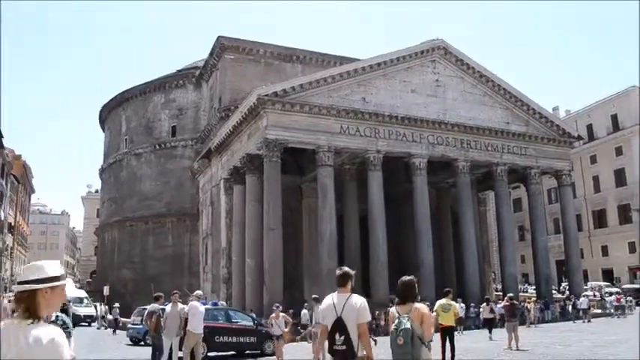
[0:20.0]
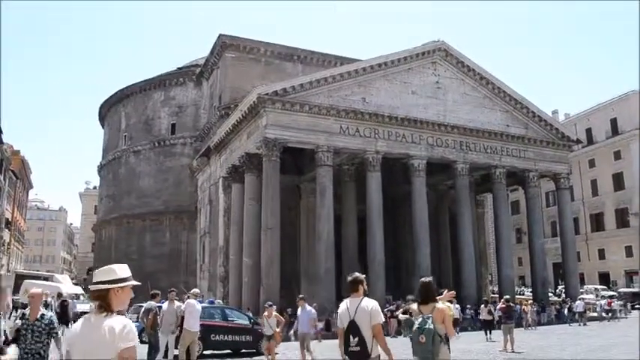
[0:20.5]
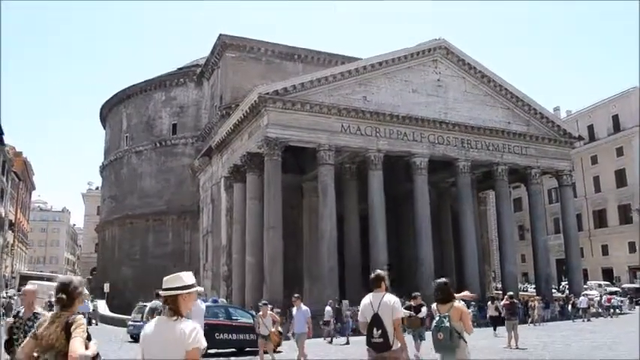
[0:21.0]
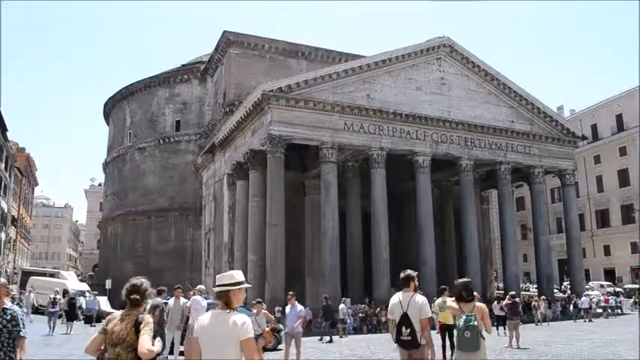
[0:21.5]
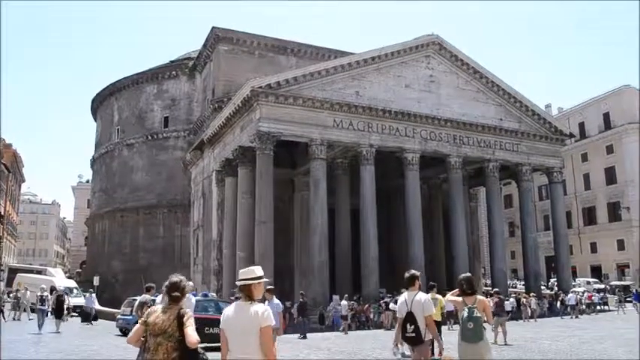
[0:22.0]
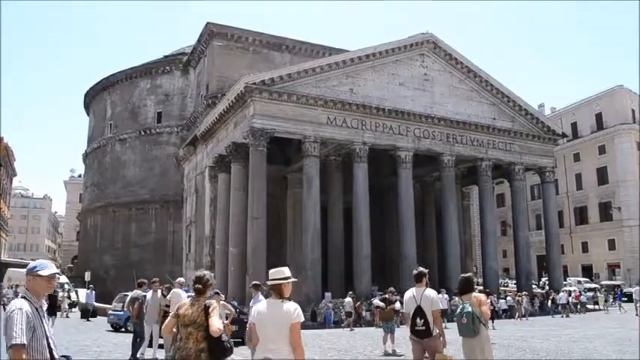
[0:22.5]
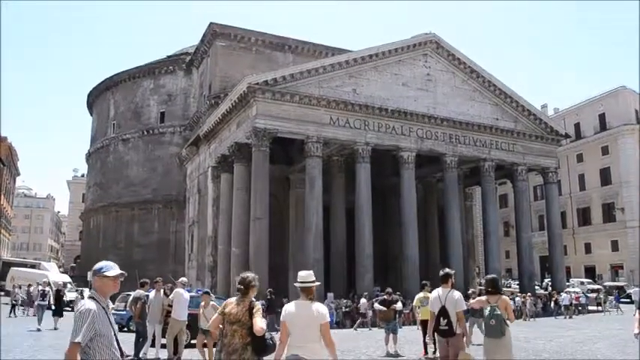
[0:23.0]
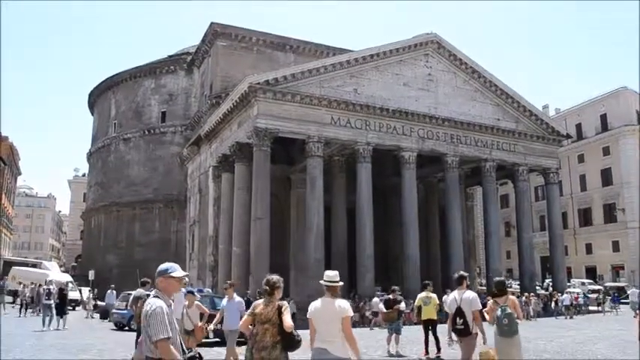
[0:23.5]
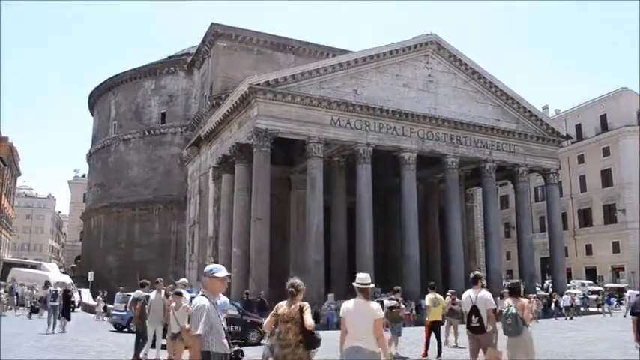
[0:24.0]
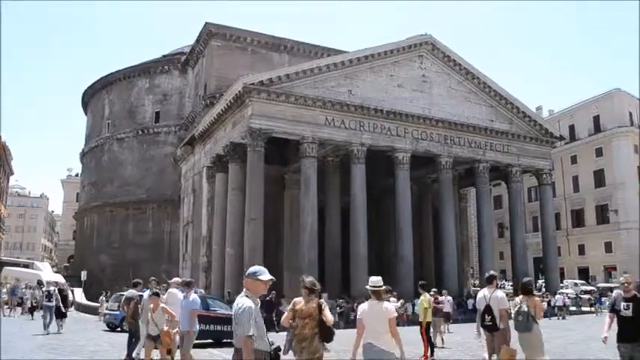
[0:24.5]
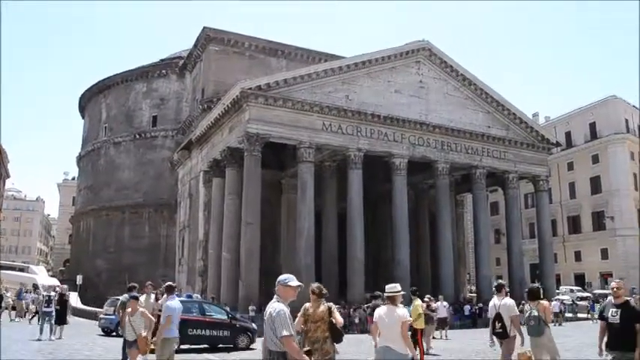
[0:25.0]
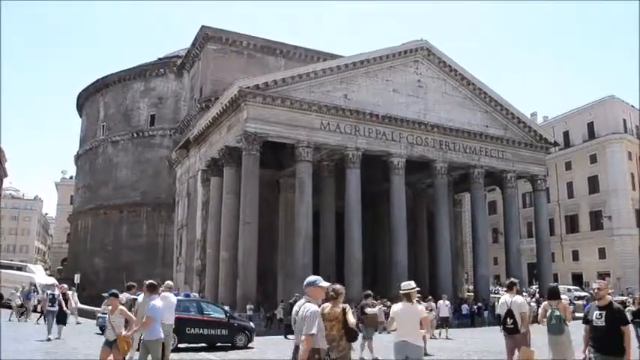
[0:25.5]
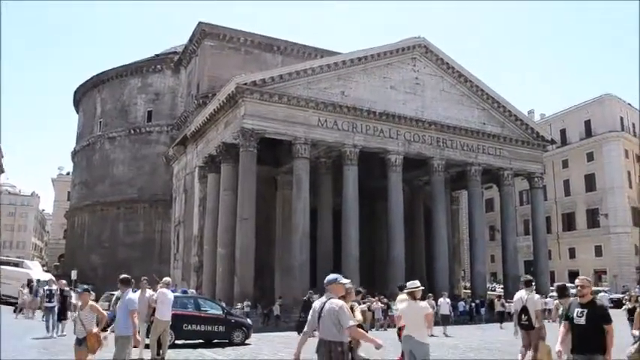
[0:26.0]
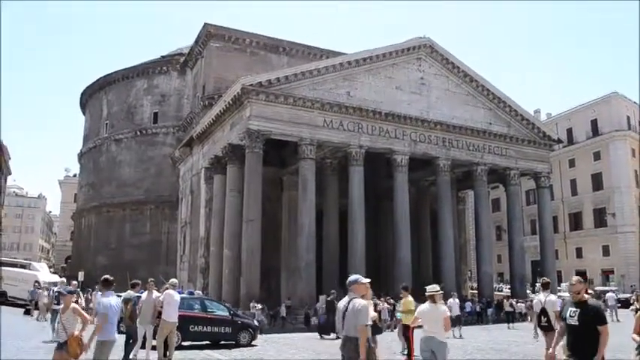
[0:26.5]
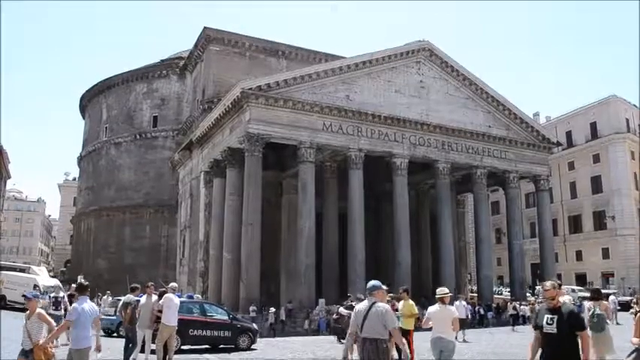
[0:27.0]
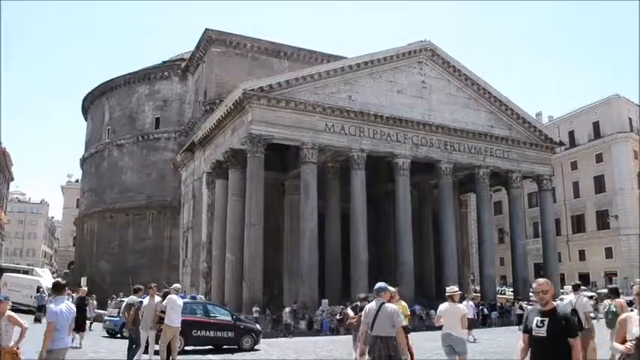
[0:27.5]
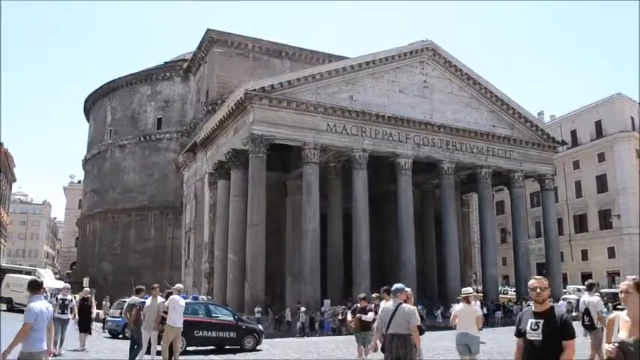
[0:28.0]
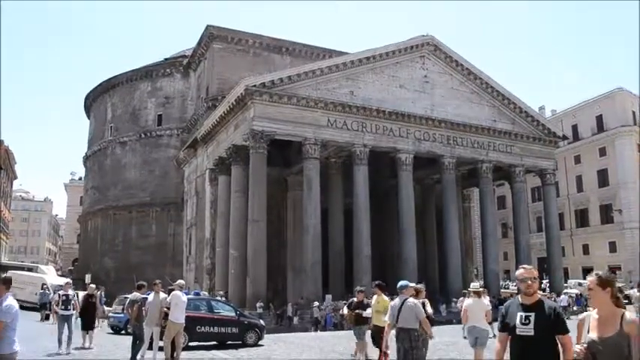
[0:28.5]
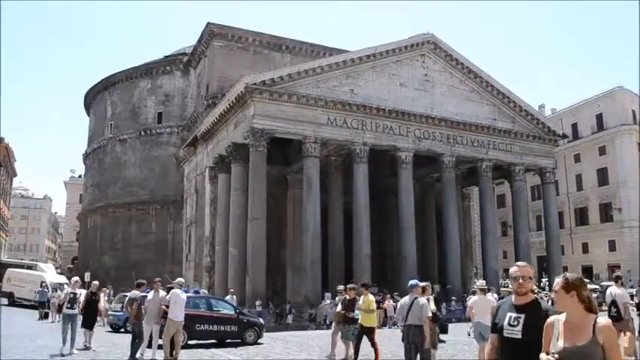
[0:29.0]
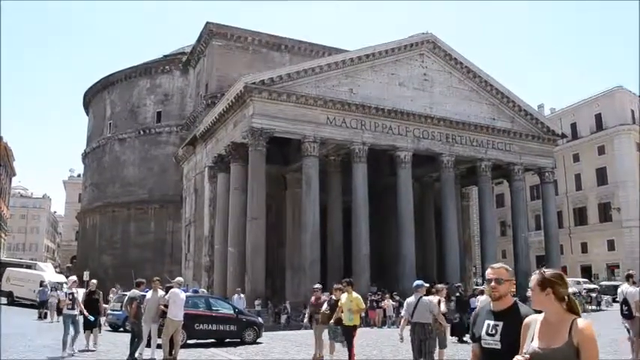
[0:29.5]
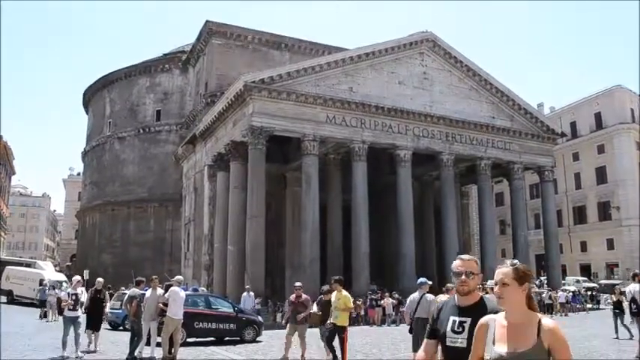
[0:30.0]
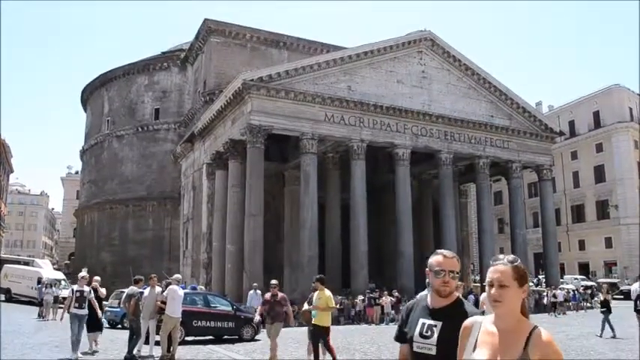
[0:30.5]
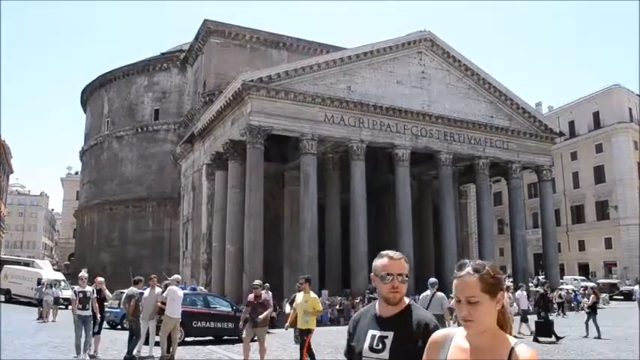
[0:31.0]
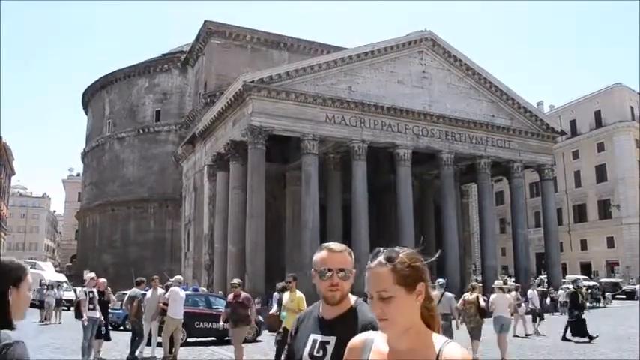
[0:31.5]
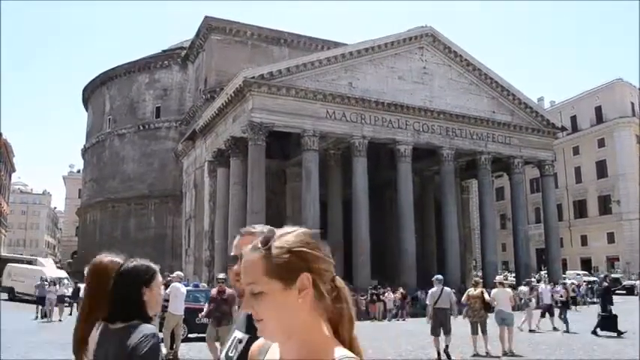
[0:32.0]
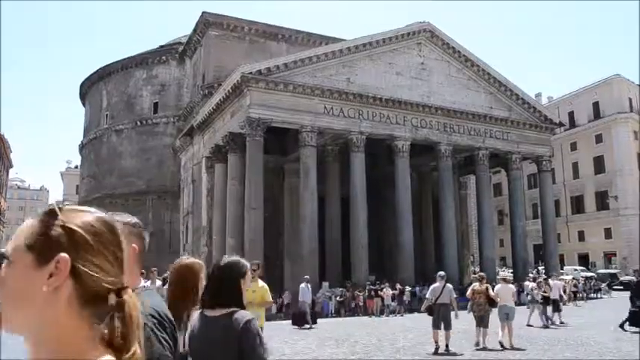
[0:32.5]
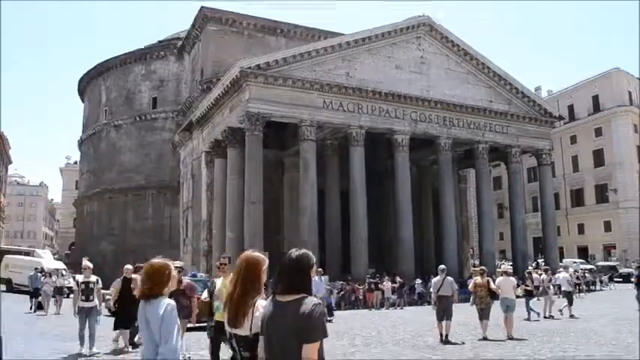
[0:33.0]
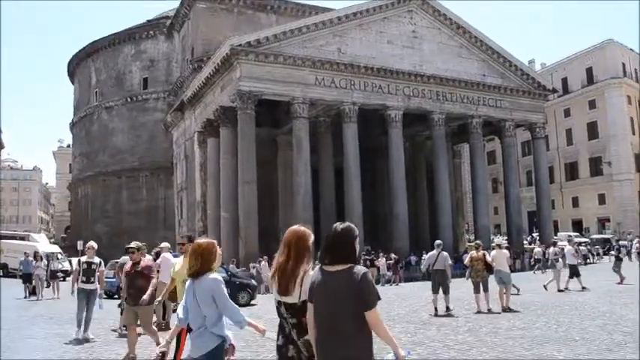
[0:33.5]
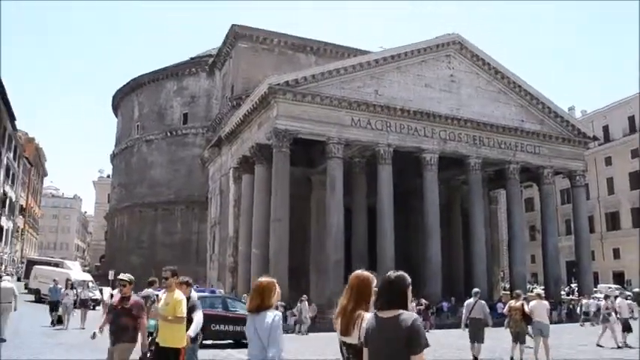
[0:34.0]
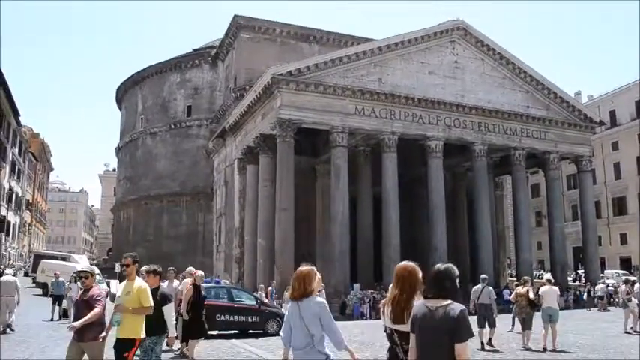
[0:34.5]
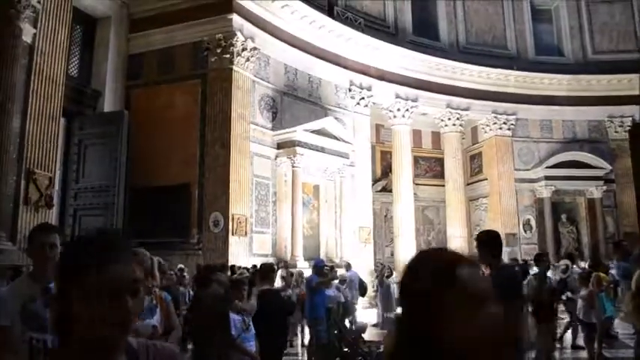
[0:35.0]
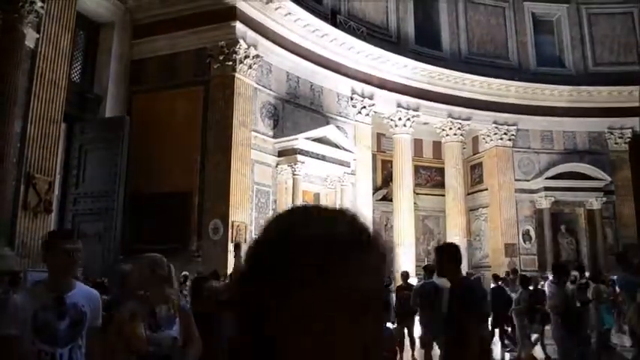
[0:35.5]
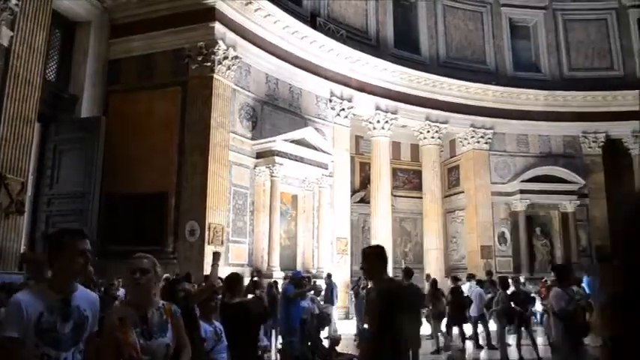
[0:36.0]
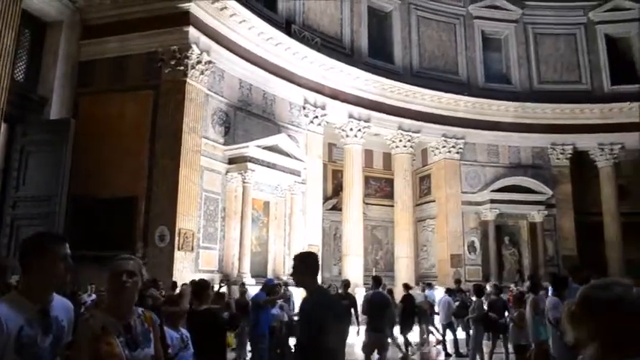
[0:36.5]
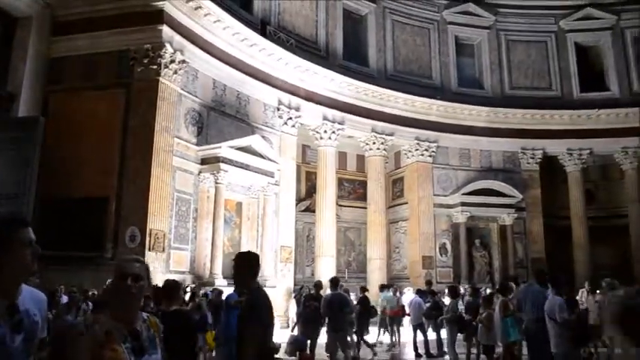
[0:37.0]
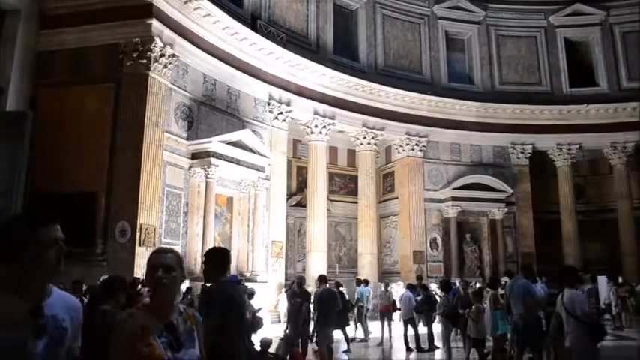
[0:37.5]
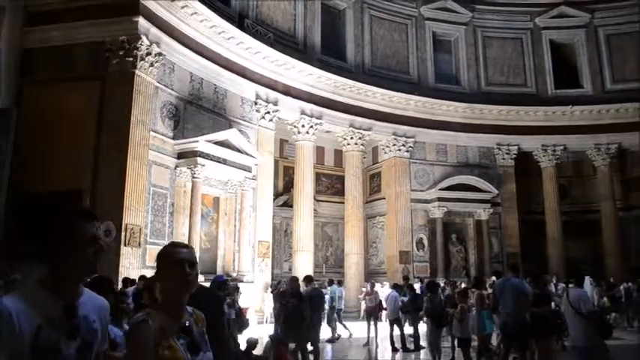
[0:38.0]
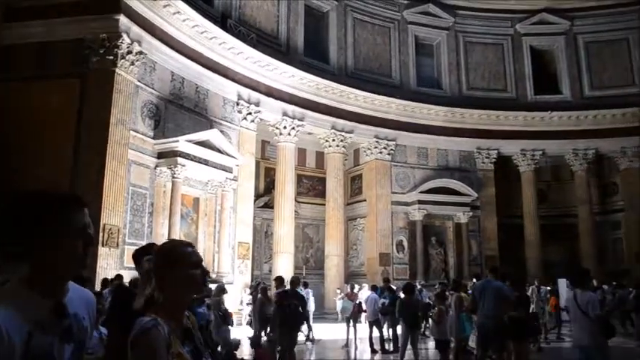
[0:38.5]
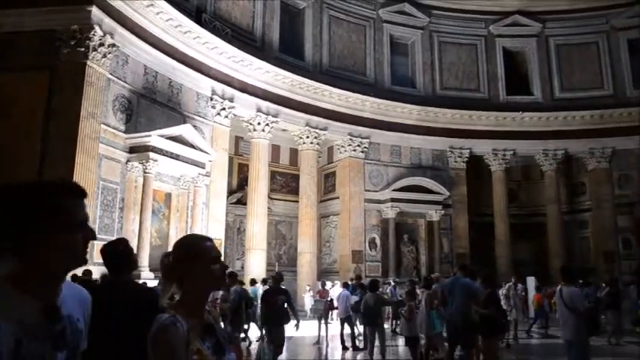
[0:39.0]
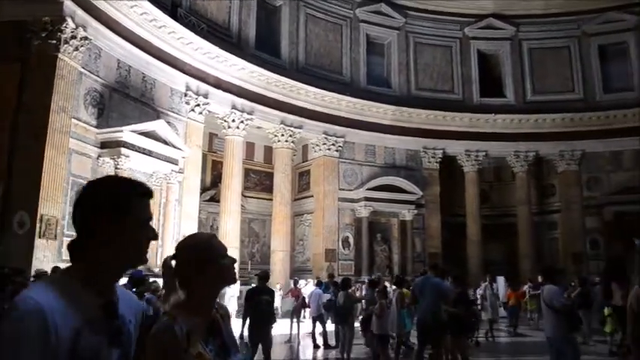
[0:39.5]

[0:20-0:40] The same building and environment continue to be shown, with lots of people walking by in different directions; it looks like a tourist attraction. A couple seems to approach near the camera: the man wears shades and a black t-shirt, and the woman has her sunglasses resting on top of her head. The camera remains at the same angle. The scene then quickly switches to what looks like the inside of the building, with pillars and statues. It is a very open area that looks like it was made from older architecture. The building looks pretty old, and based on the angles it appears it could be a dome-shaped indoor environment.